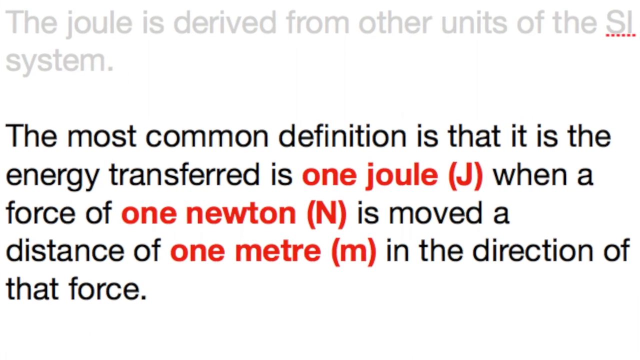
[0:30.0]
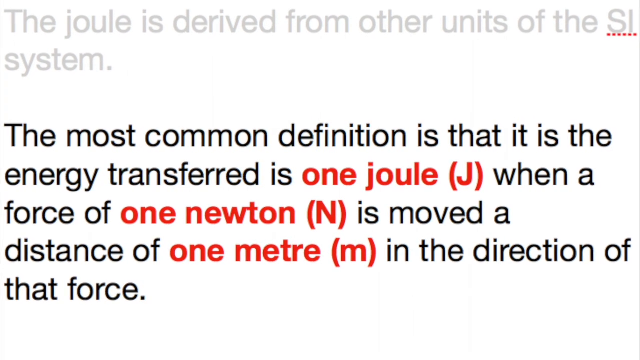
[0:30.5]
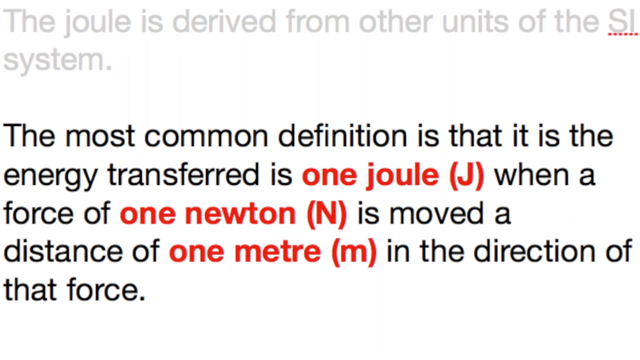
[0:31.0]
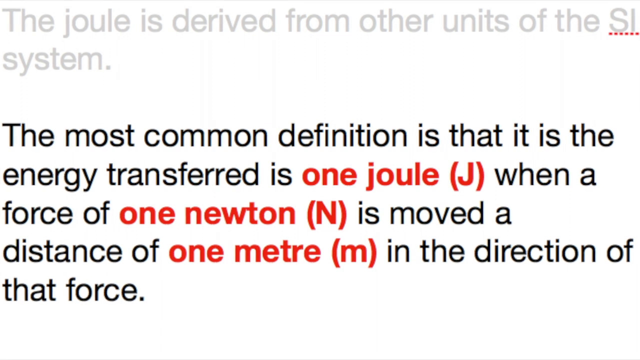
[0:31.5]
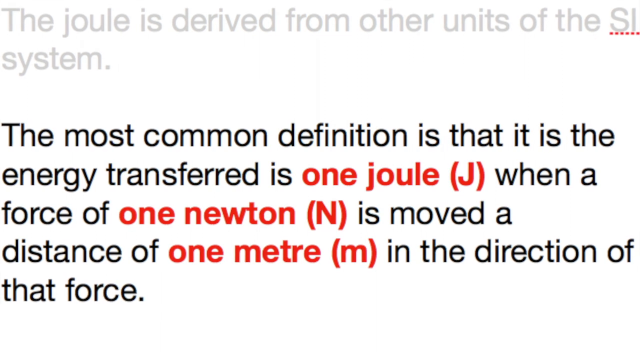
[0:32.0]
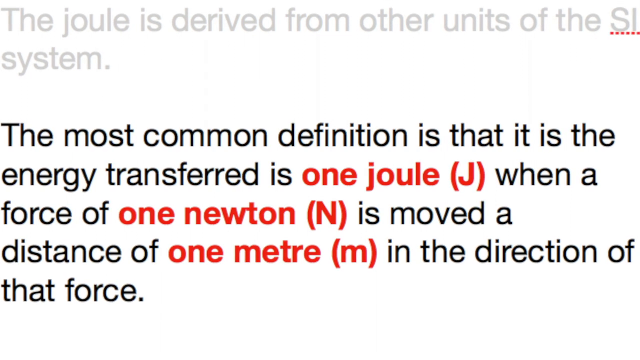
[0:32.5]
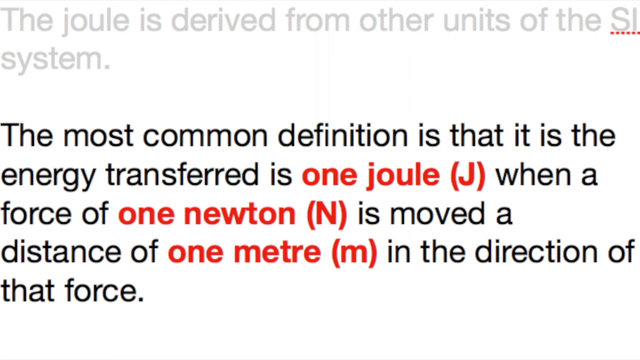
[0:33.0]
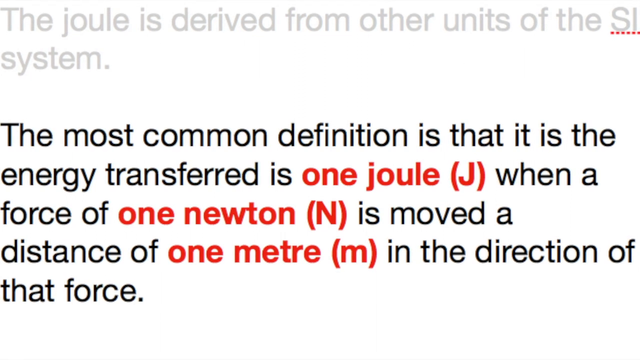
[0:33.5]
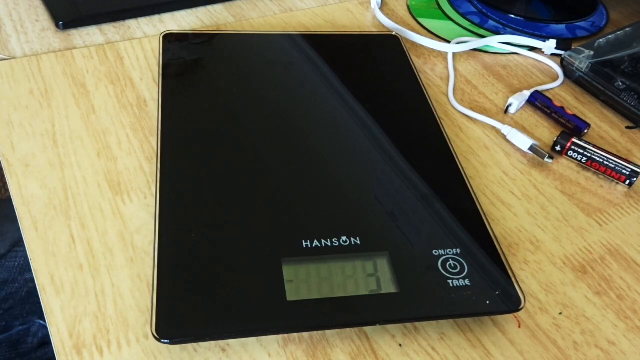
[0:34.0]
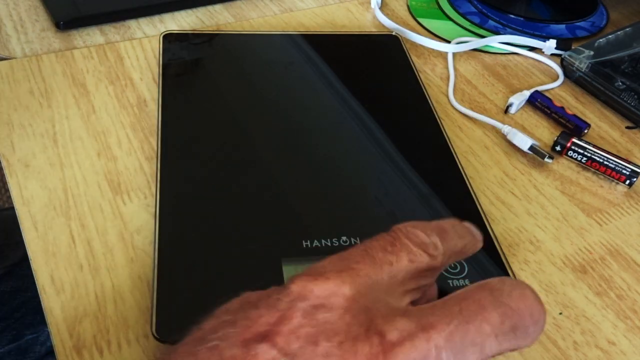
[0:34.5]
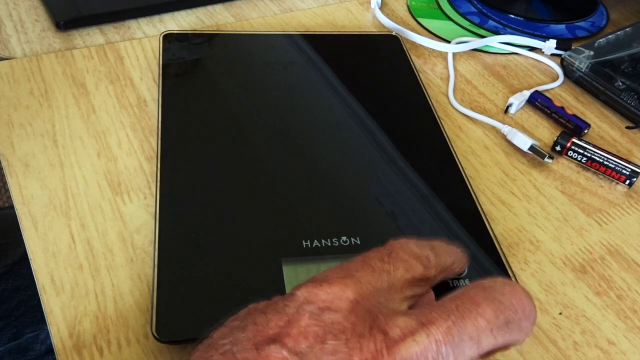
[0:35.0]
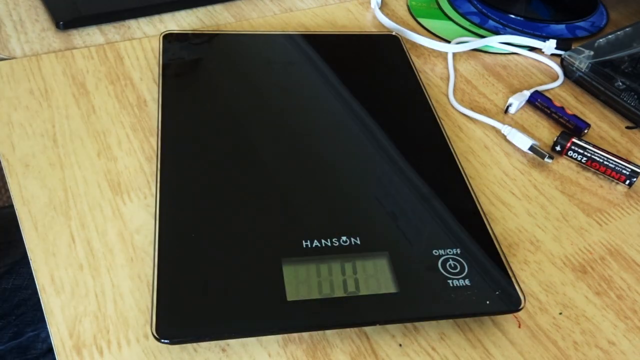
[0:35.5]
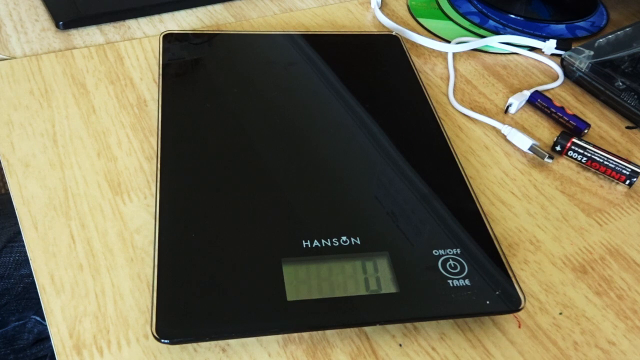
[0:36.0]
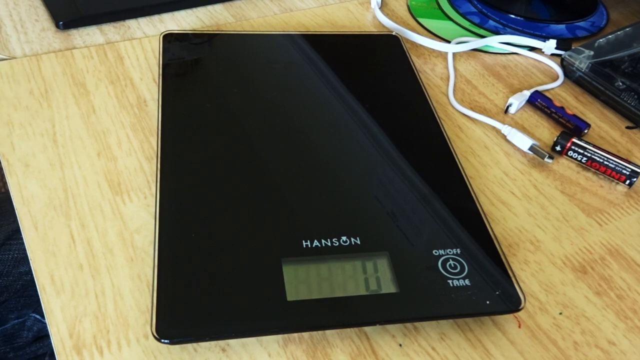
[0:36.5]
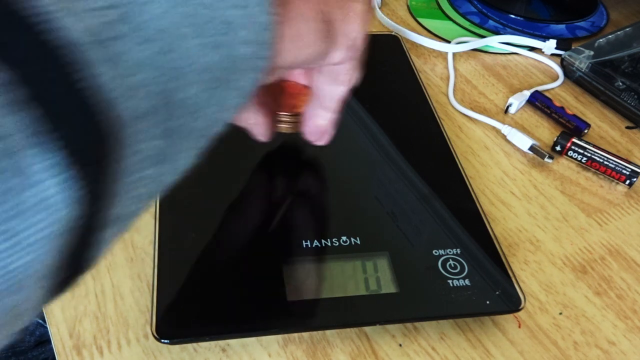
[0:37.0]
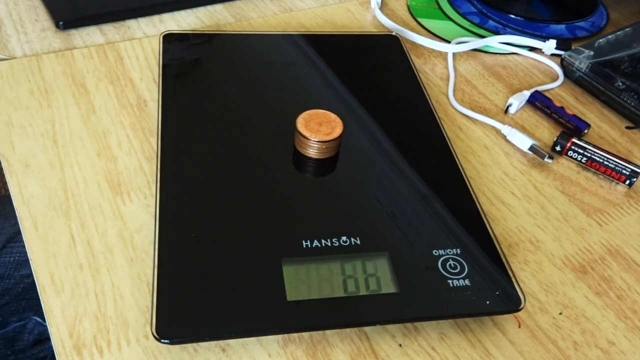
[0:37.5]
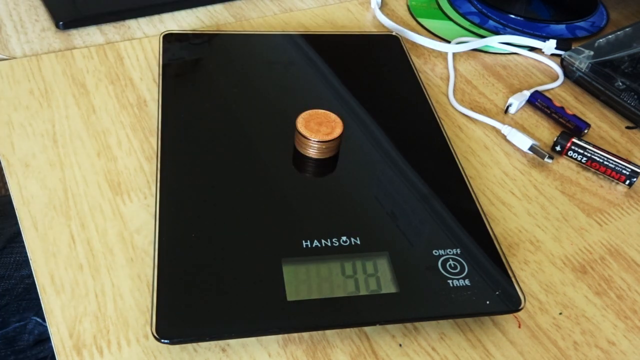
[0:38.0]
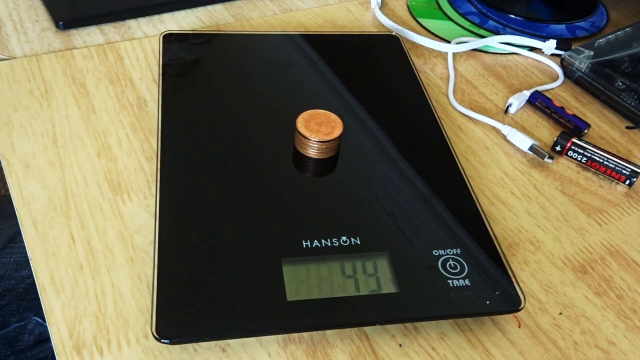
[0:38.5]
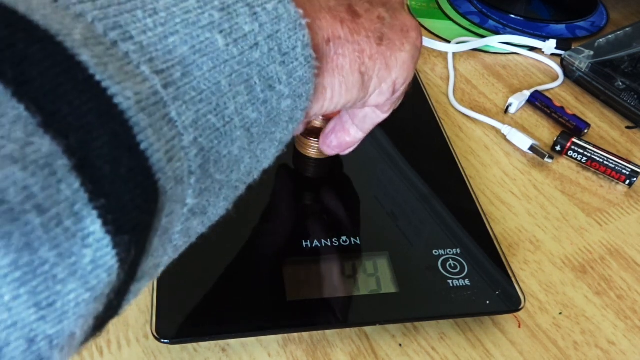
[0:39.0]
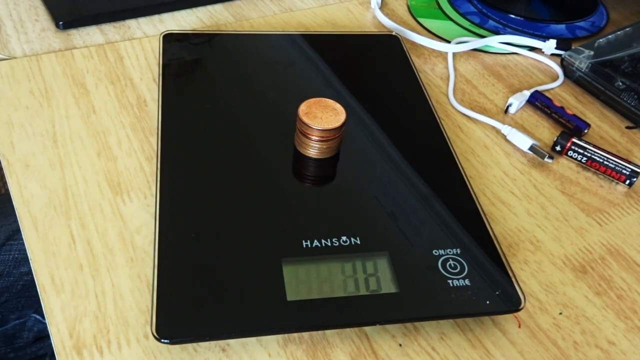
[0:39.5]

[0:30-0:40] A diagram with text is shown; some of the text is in color, and a unit abbreviated J appears in parentheses.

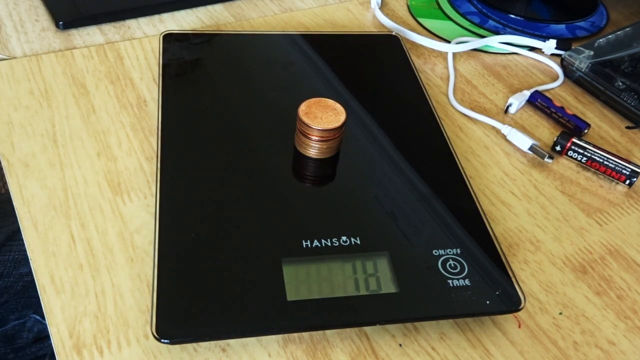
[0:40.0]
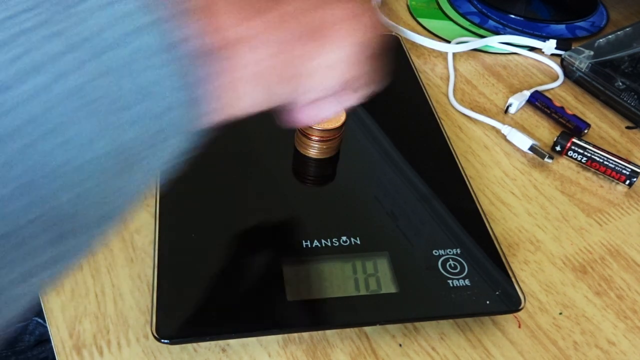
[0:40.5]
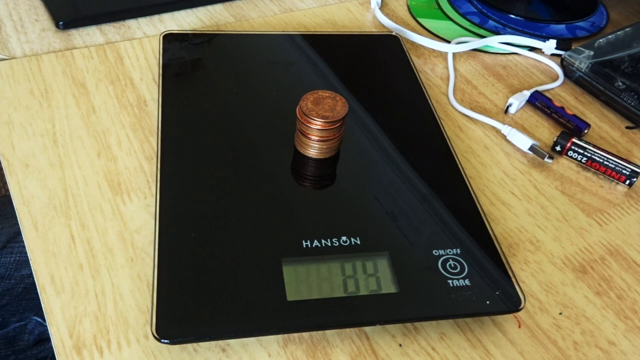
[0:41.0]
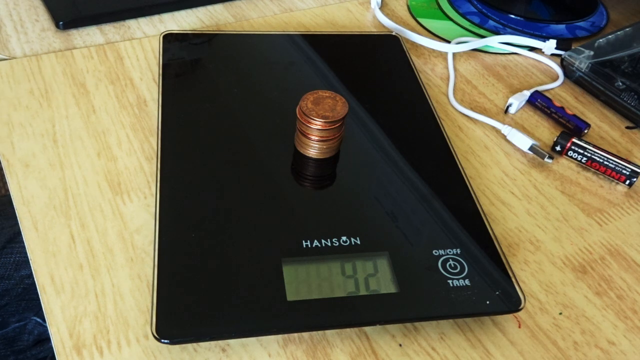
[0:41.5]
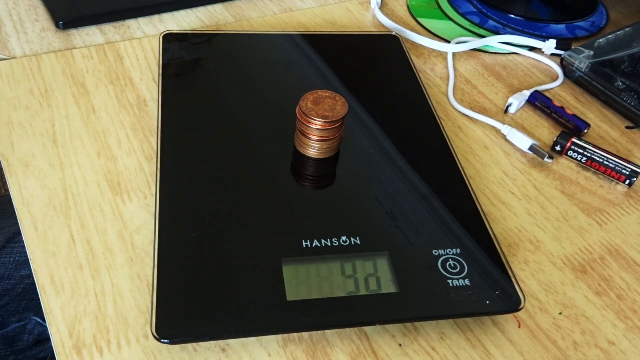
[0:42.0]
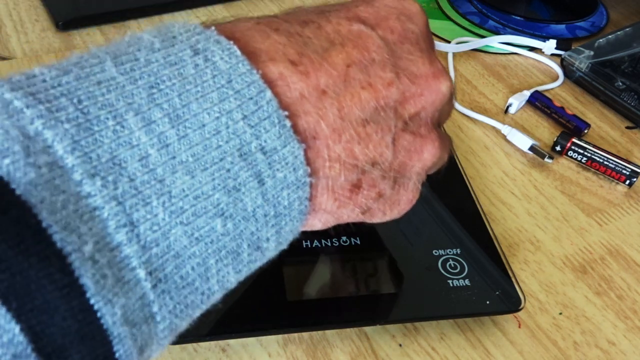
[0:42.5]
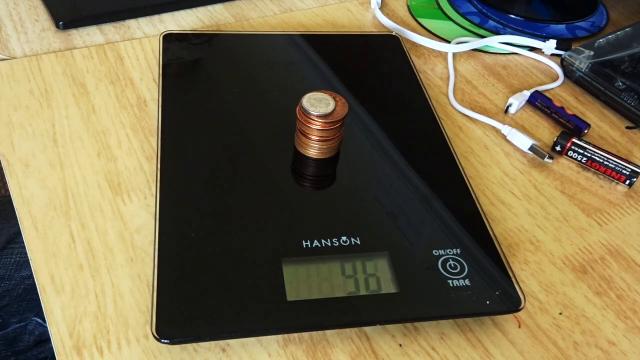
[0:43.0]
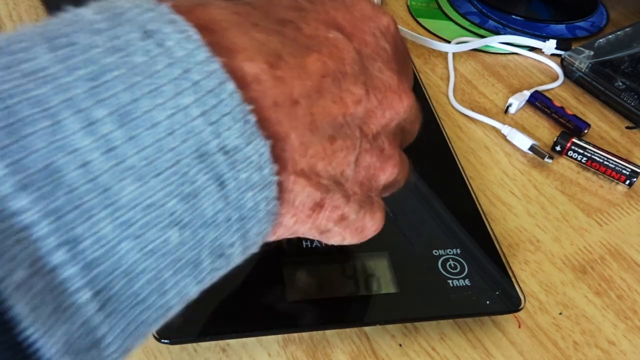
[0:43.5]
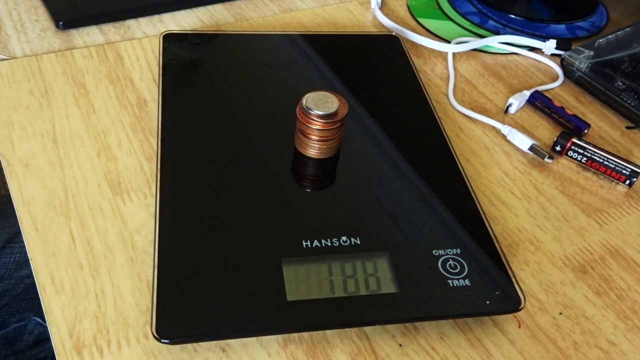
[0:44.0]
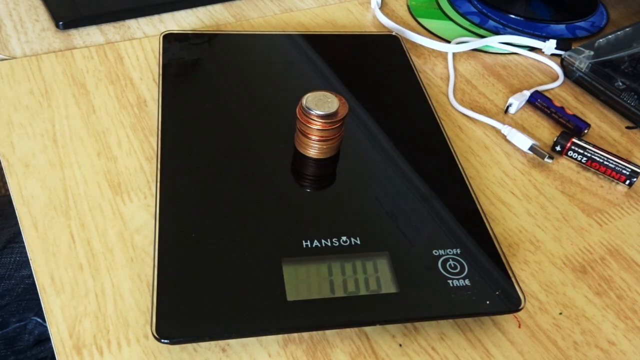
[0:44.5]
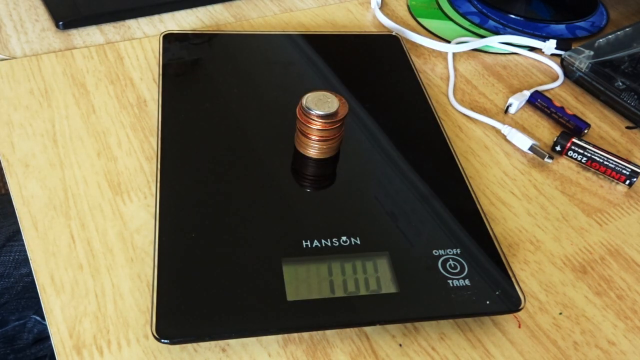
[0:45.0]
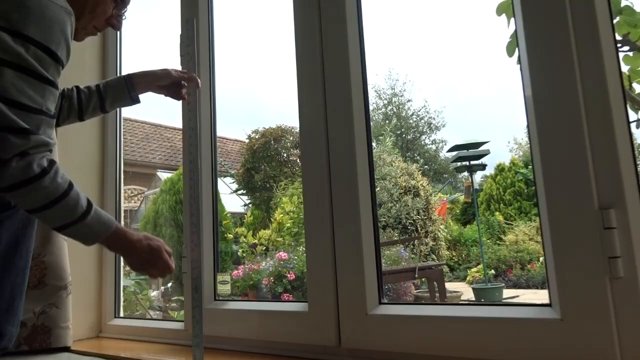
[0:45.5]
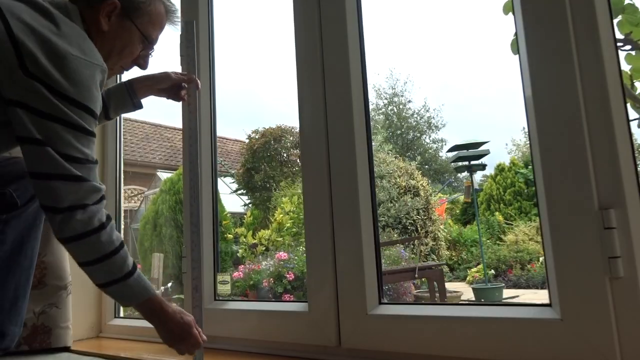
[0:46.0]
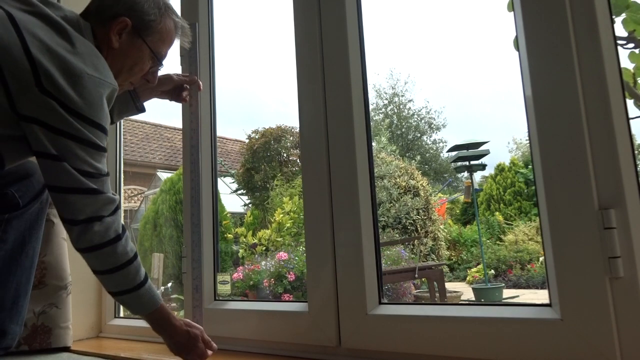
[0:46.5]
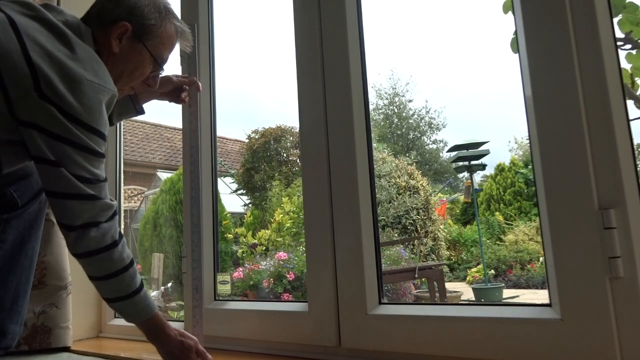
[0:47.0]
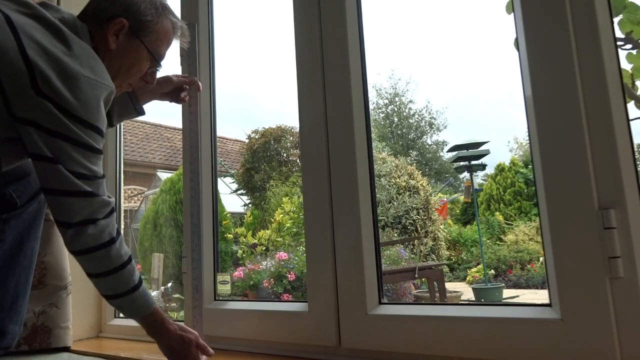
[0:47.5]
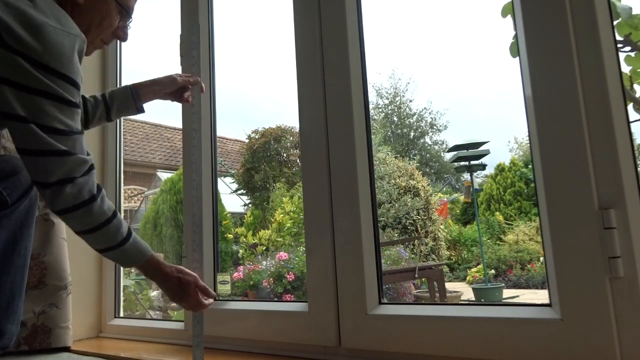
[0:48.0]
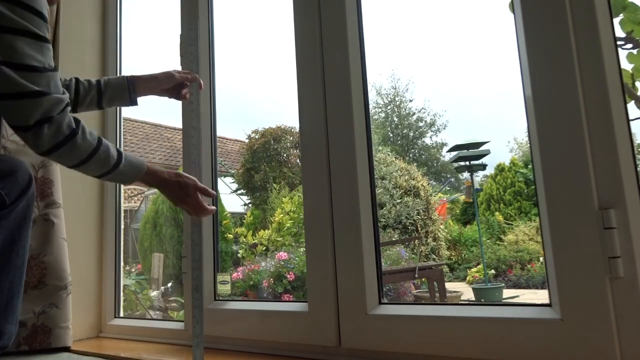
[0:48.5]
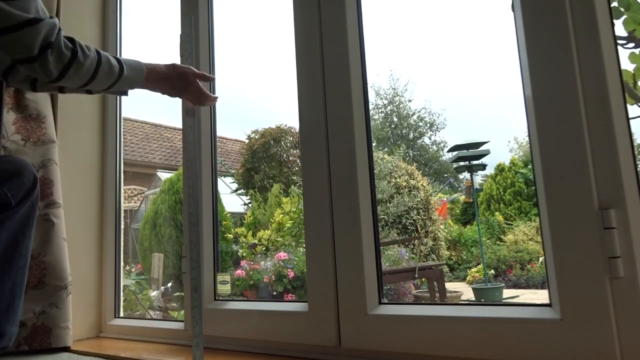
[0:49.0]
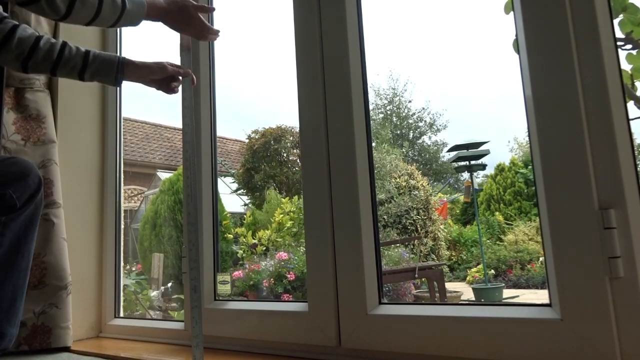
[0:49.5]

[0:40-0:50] An old man puts a bunch of different types of coins on a scale. The scale has an on-off button in the bottom right-hand section of the screen, labeled "on-off", and there is also text in a foreign language.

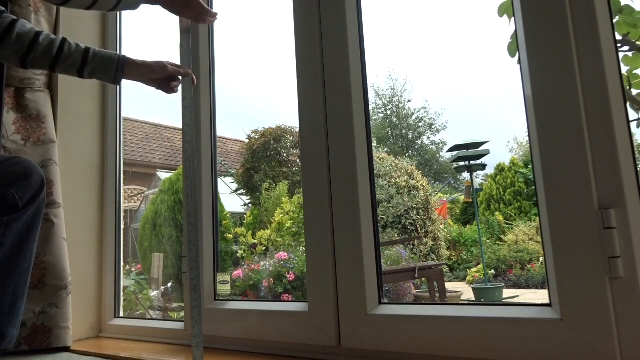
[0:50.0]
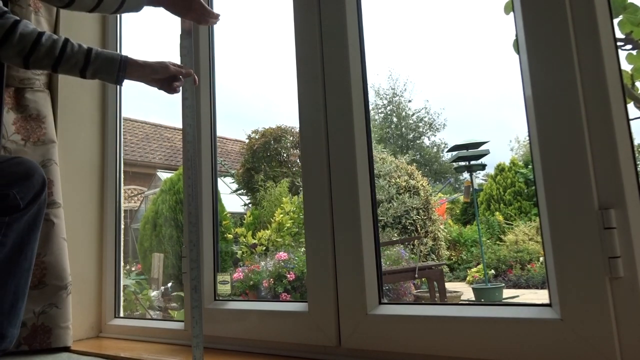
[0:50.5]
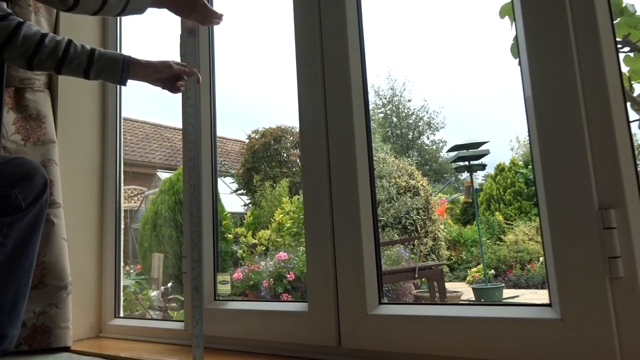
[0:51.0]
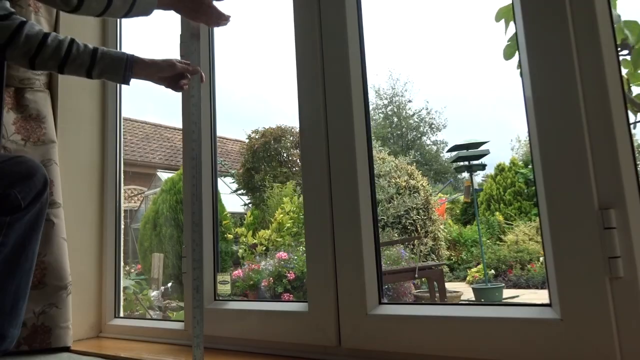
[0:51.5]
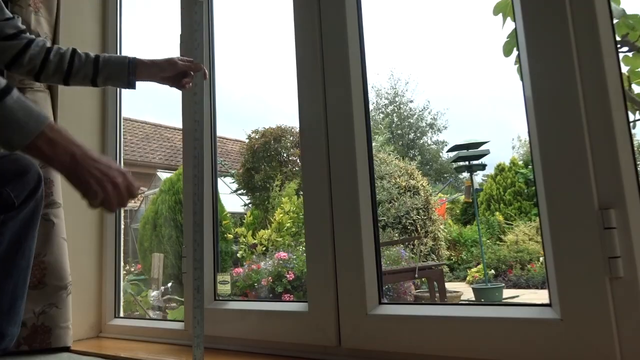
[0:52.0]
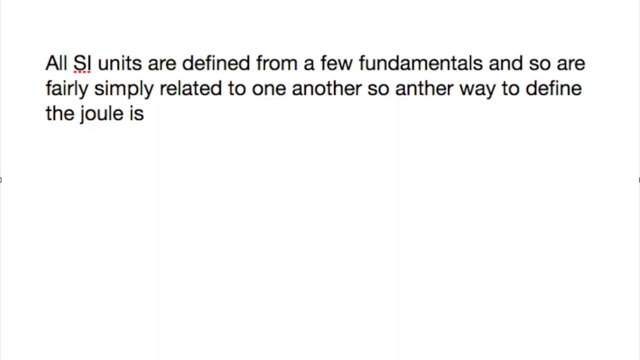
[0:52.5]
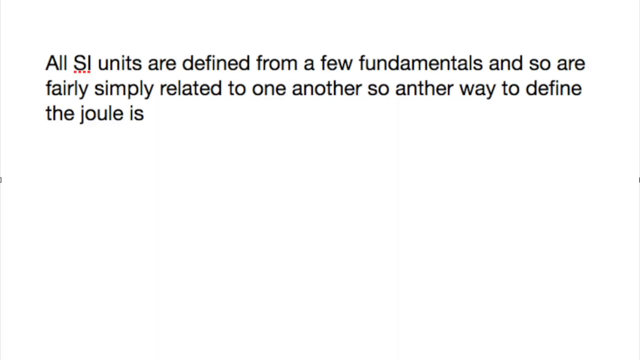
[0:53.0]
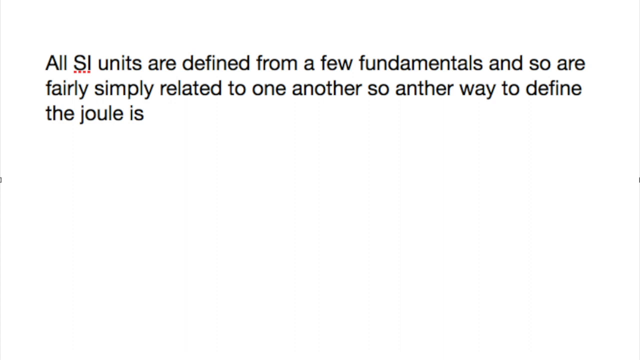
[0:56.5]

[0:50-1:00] Black text is shown on a white background.